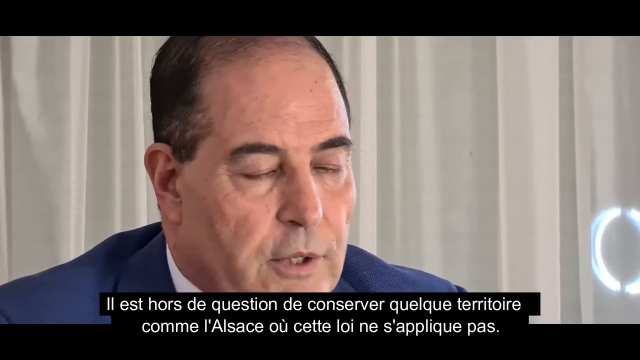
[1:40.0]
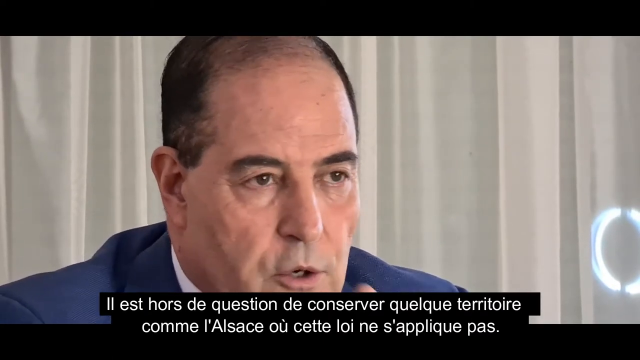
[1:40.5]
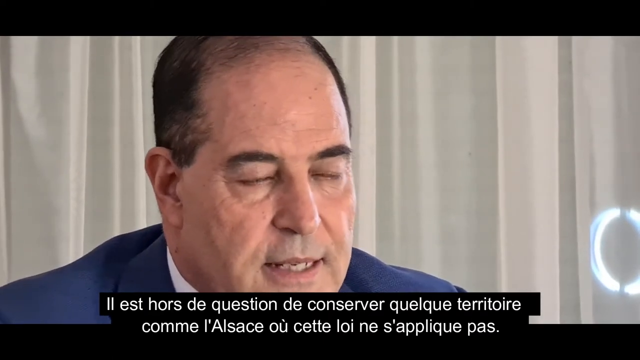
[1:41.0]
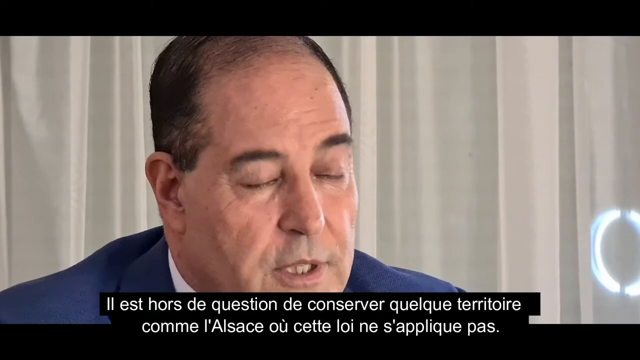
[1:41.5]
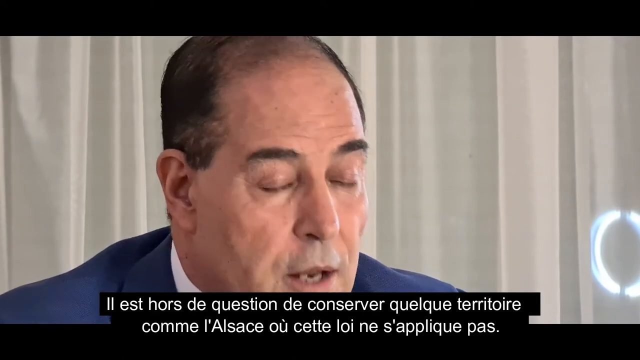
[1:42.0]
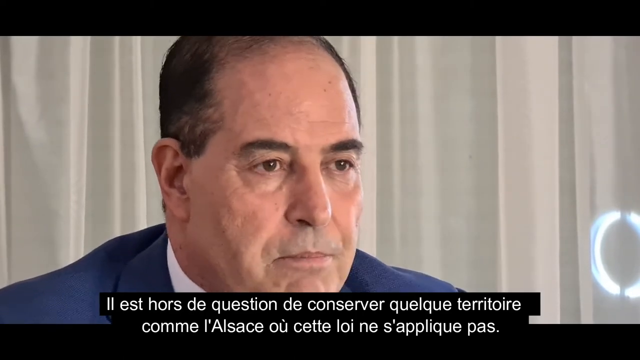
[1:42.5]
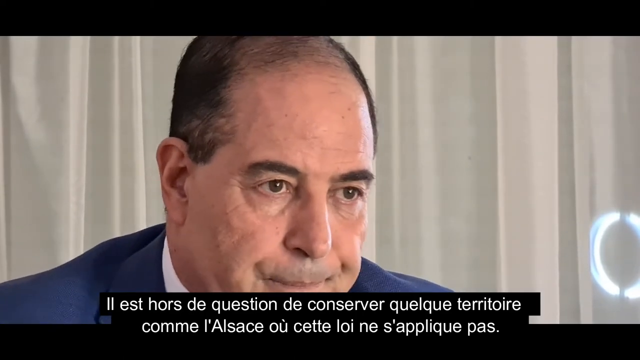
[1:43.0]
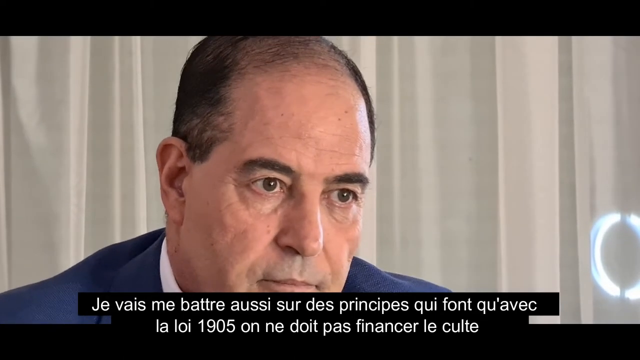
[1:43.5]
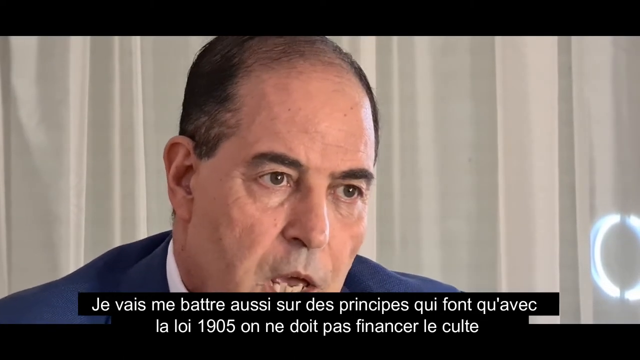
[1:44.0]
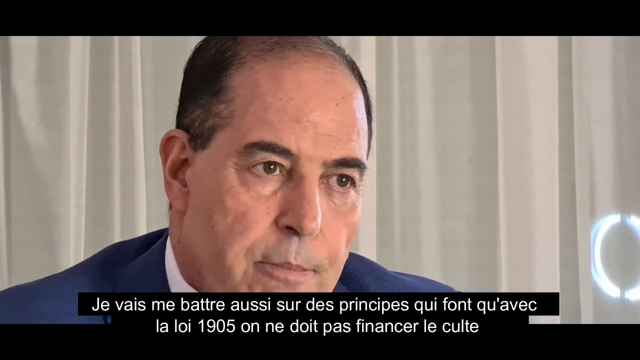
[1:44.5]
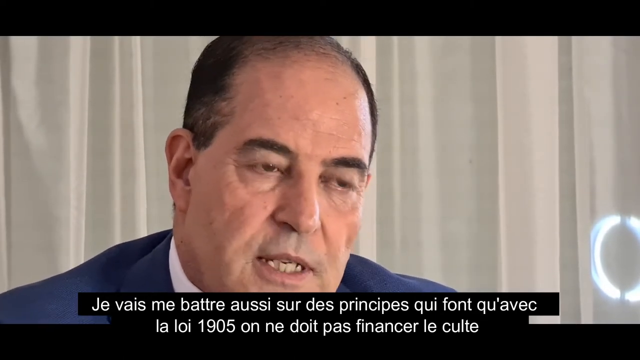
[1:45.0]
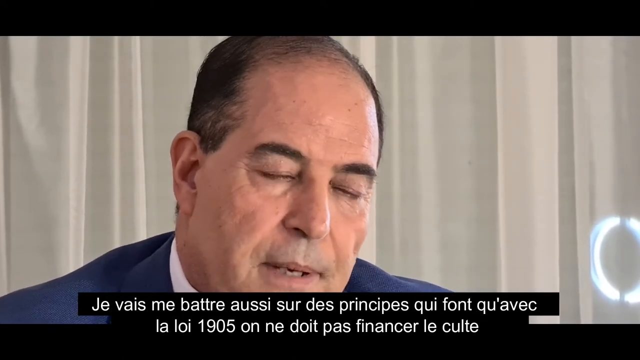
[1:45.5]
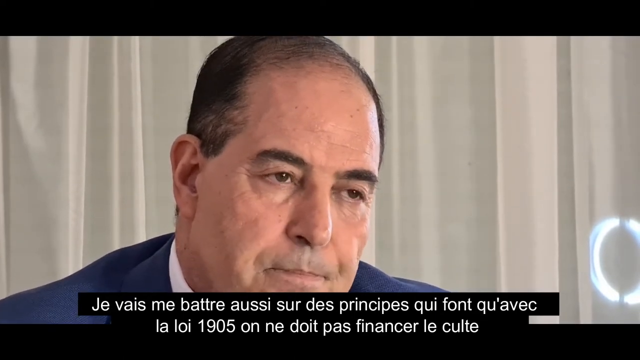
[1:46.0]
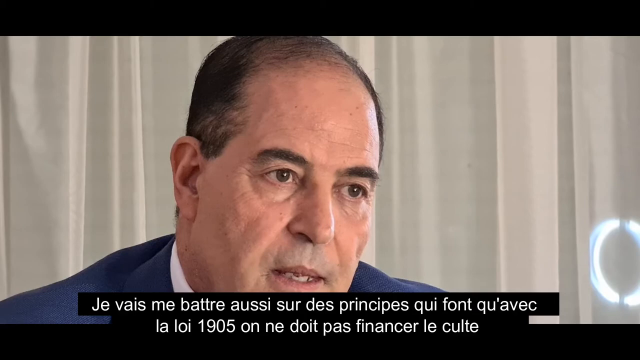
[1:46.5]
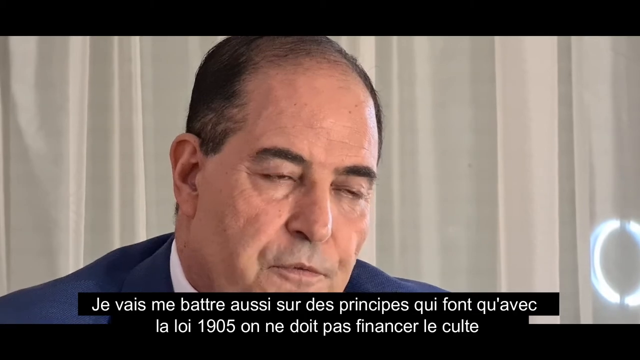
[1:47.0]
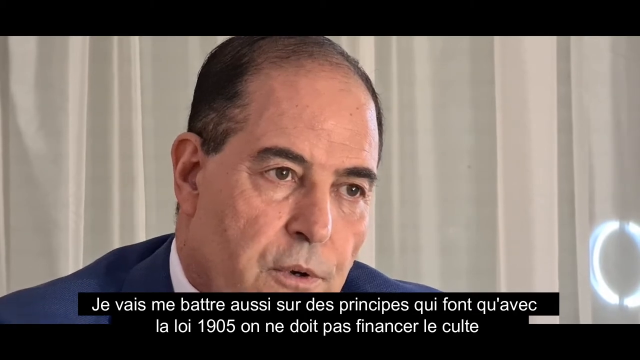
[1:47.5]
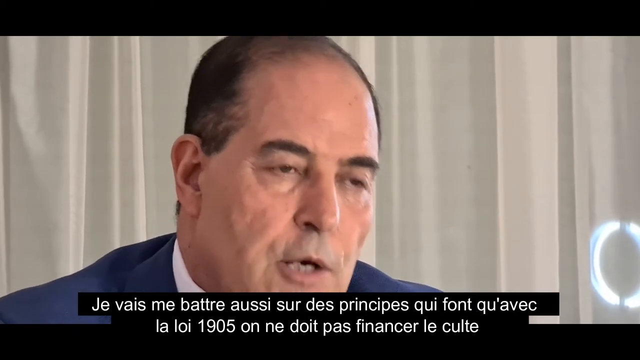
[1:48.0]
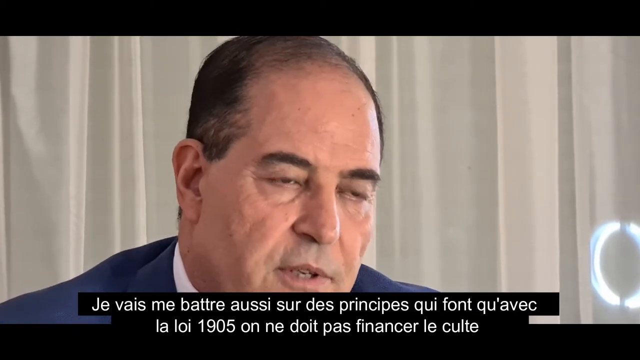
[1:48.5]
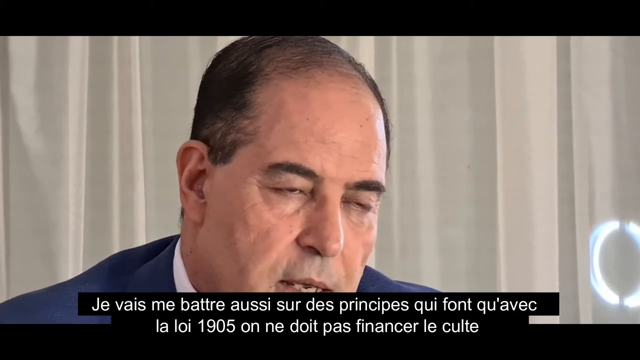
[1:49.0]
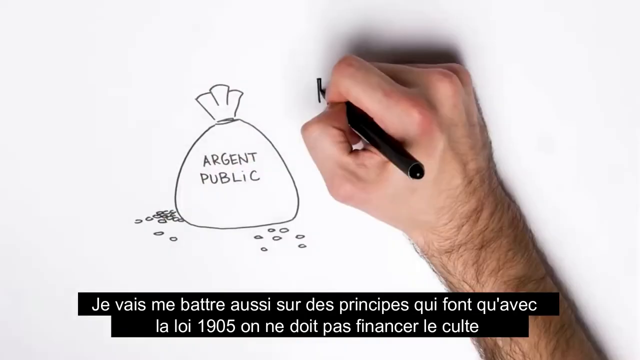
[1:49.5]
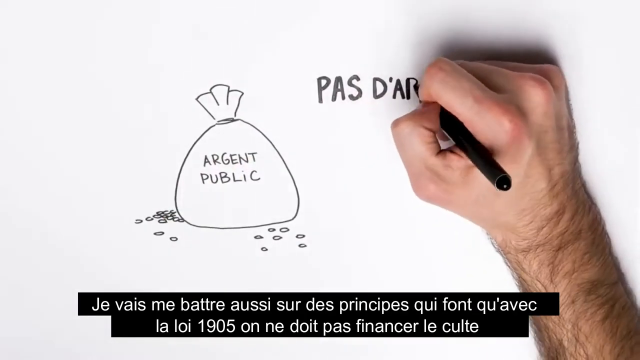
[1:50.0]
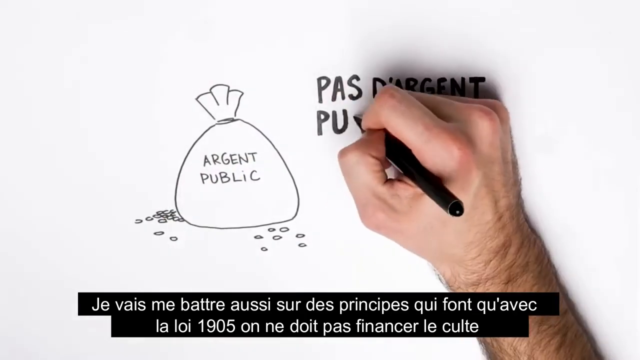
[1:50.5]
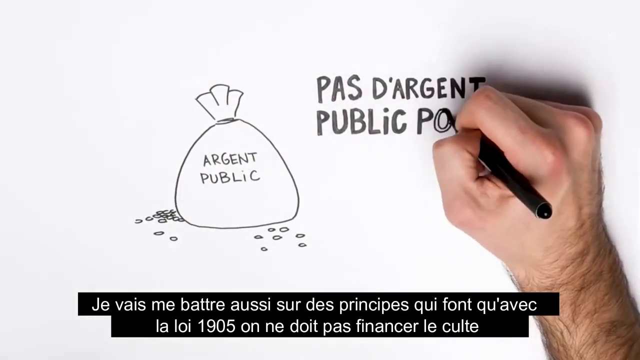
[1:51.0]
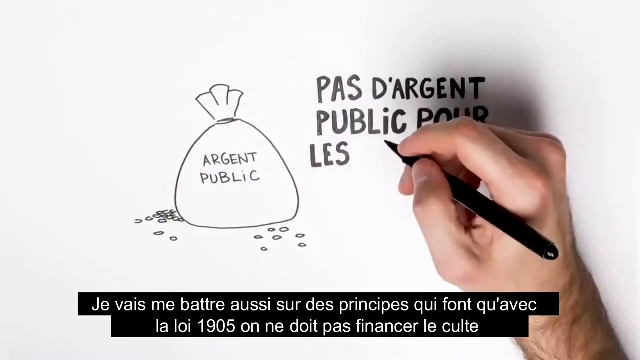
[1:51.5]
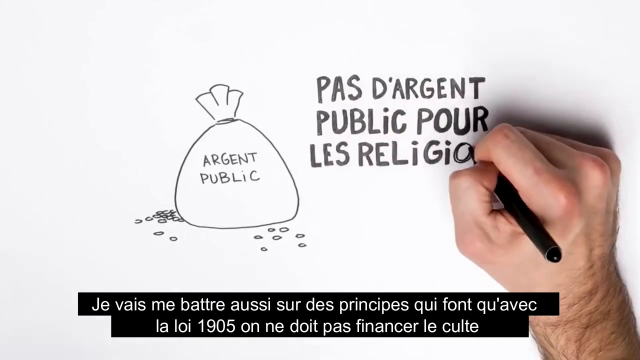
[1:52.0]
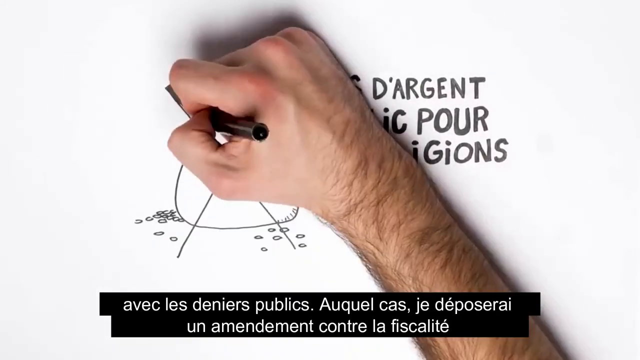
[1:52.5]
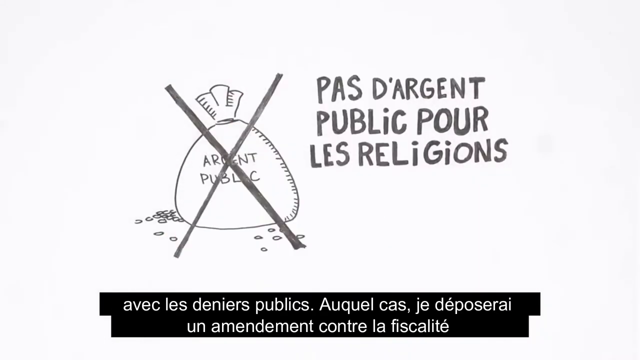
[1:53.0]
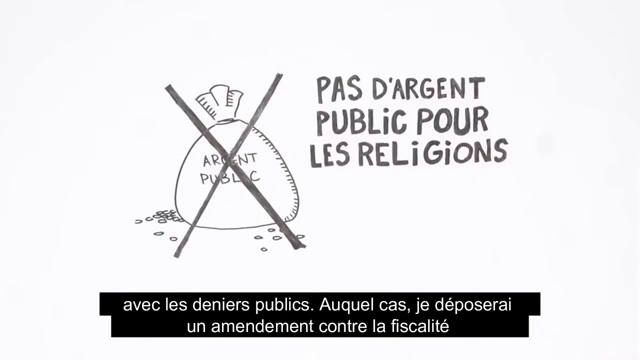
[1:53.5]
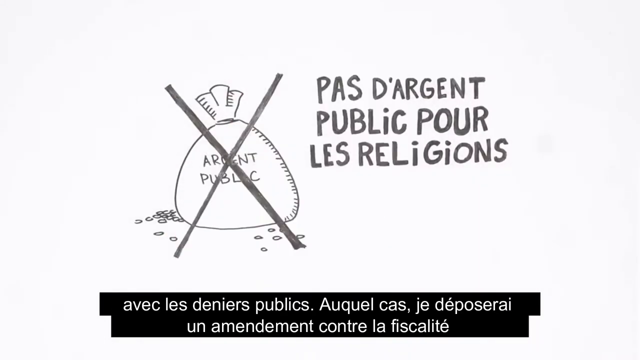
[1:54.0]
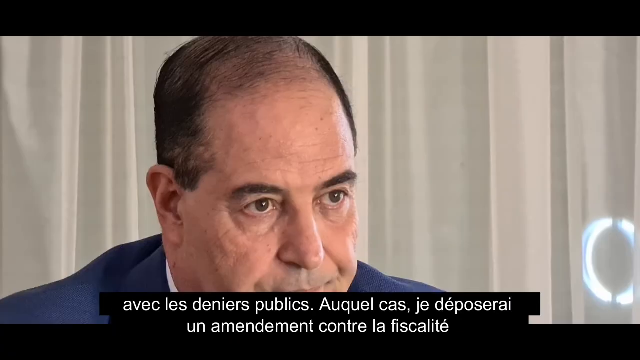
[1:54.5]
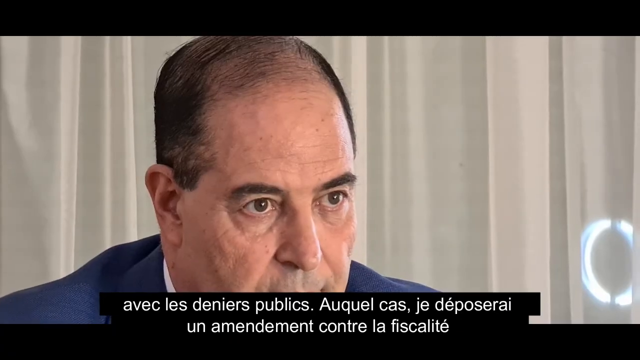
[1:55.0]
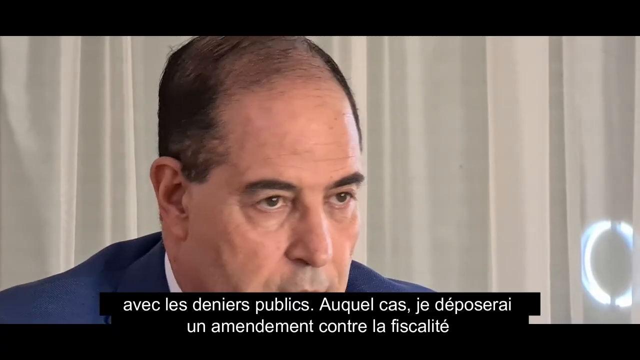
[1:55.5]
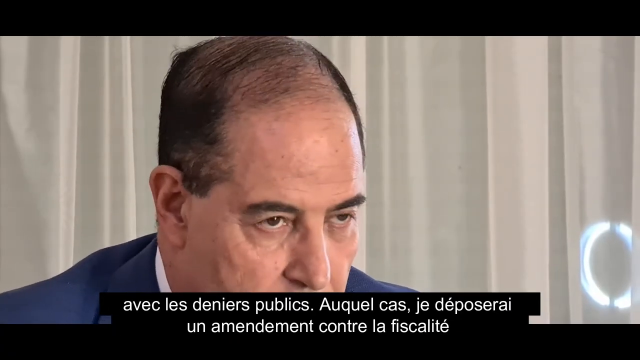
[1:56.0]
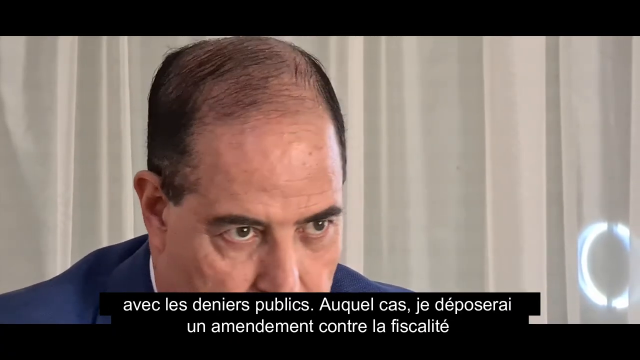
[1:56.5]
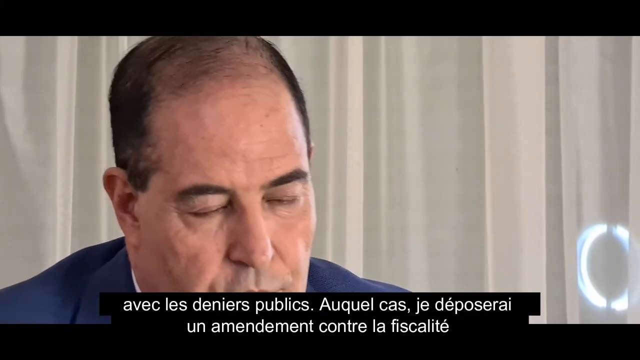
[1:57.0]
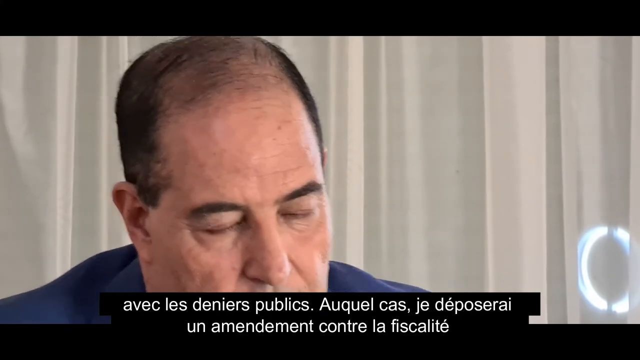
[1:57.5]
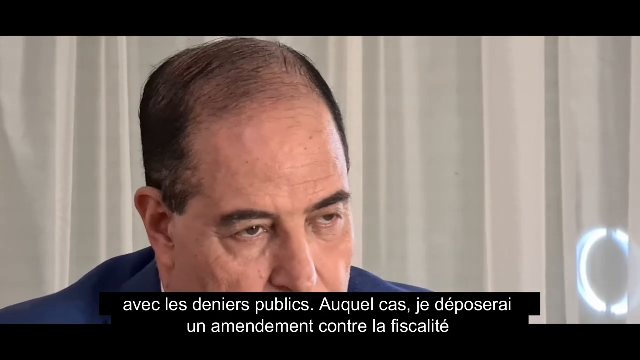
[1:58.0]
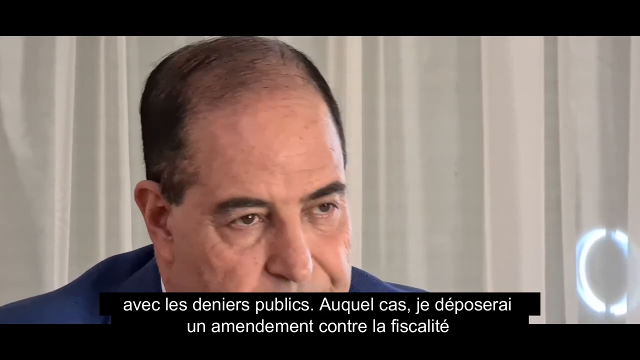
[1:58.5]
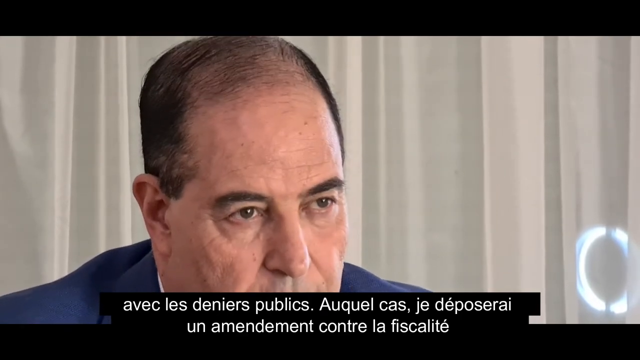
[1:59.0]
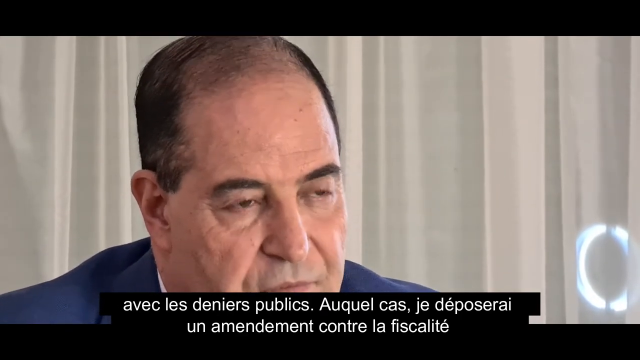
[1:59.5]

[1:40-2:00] The man continues to talk with the view zoomed in close to his face. The scene changes to someone's hand drawing a money bag with the two words "Agent Public" on it. To the right, the hand writes words in a foreign language pertaining to religions. The scene shifts back to the man talking with a serious look, the view zoomed in close to his face and captions in a foreign language at the bottom. Again, the hand draws the money bag reading "Agent Public" and writes something in a foreign language next to it having to do with religions, then crosses out the money bag with a giant black X.